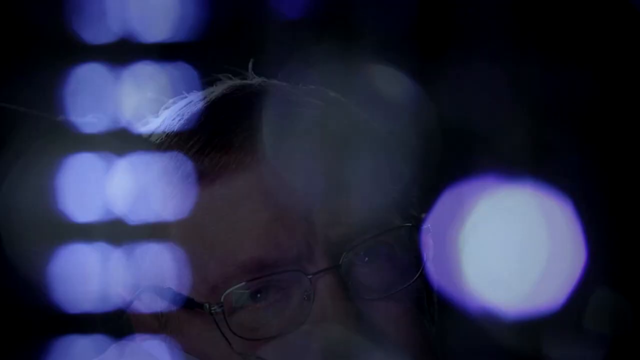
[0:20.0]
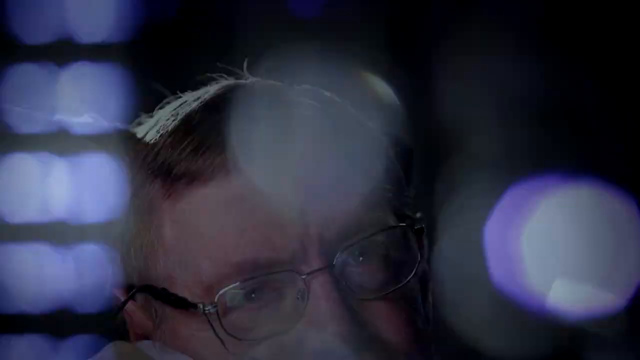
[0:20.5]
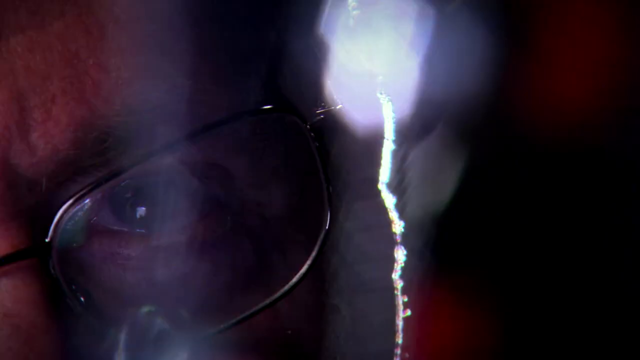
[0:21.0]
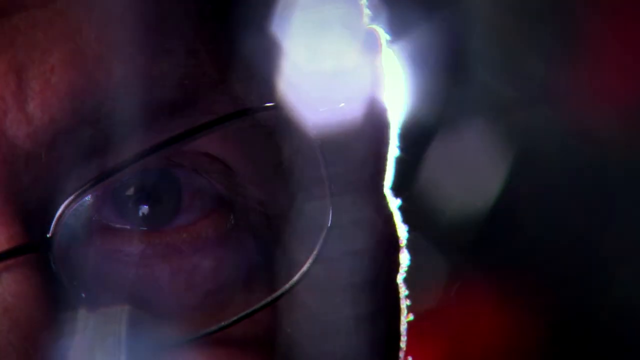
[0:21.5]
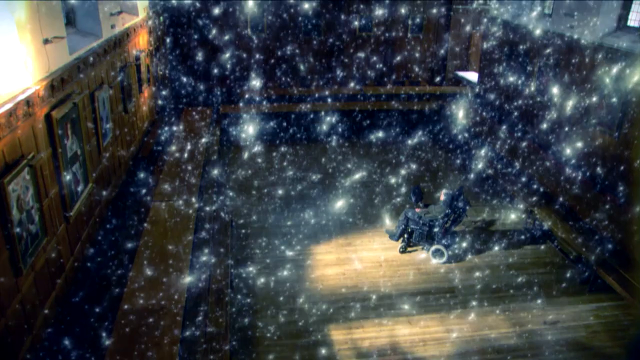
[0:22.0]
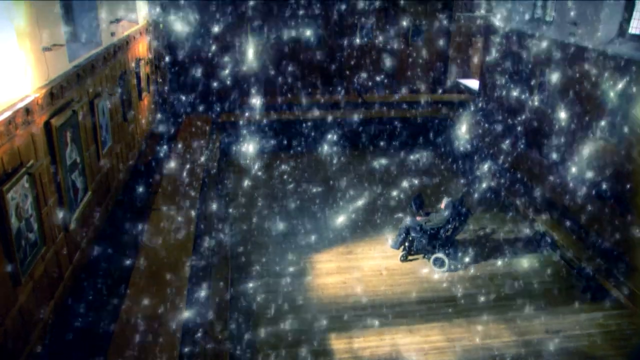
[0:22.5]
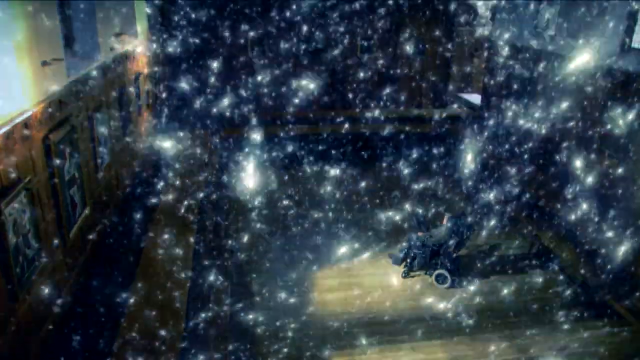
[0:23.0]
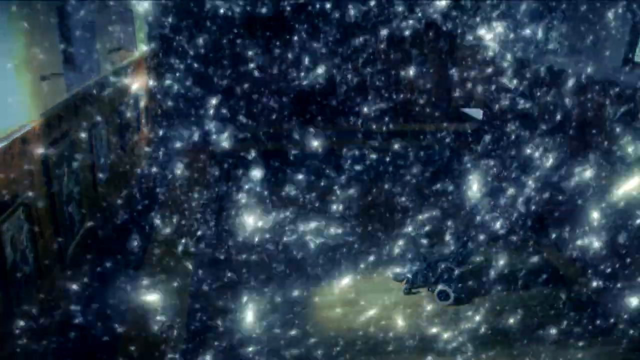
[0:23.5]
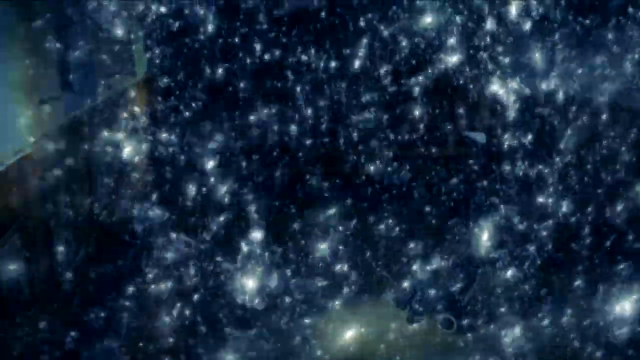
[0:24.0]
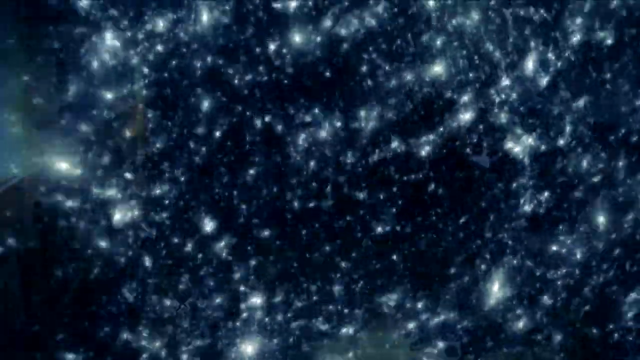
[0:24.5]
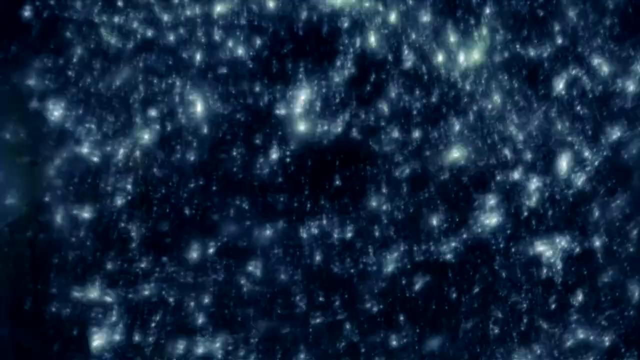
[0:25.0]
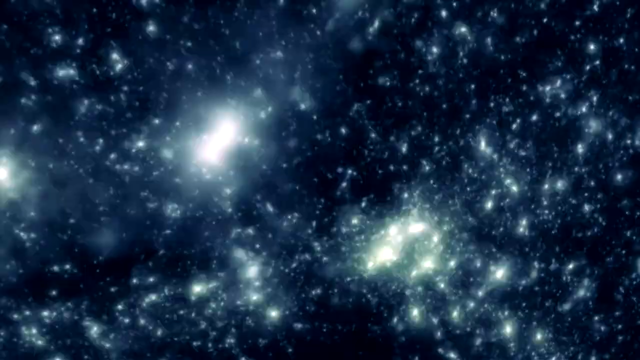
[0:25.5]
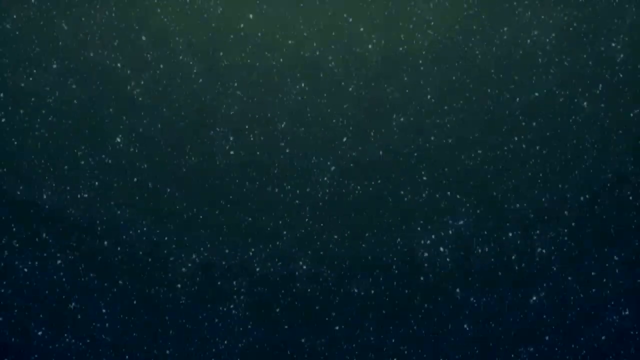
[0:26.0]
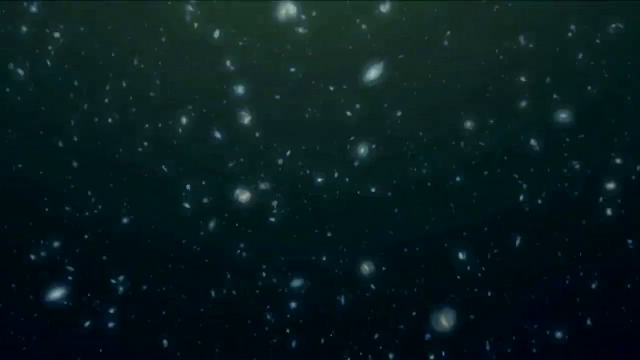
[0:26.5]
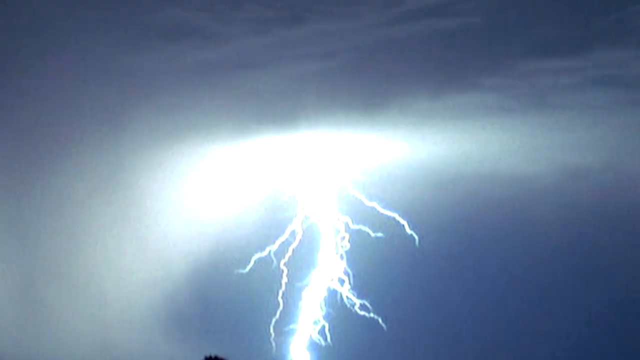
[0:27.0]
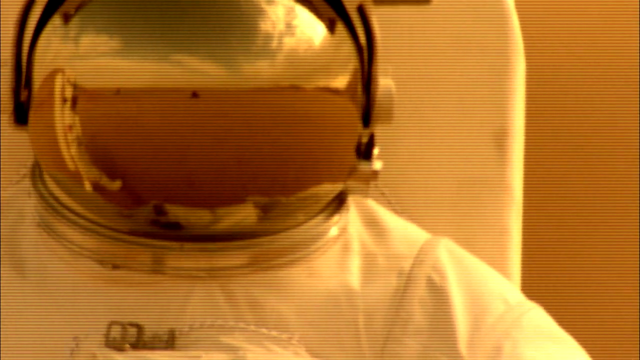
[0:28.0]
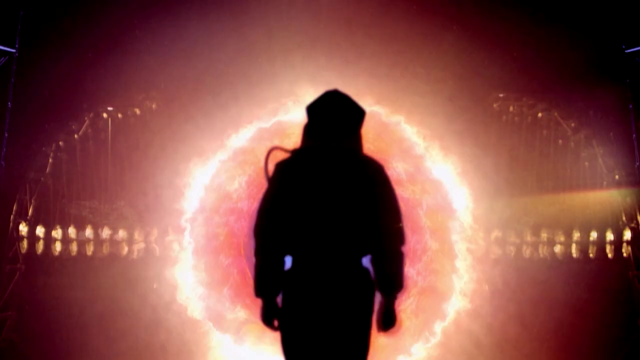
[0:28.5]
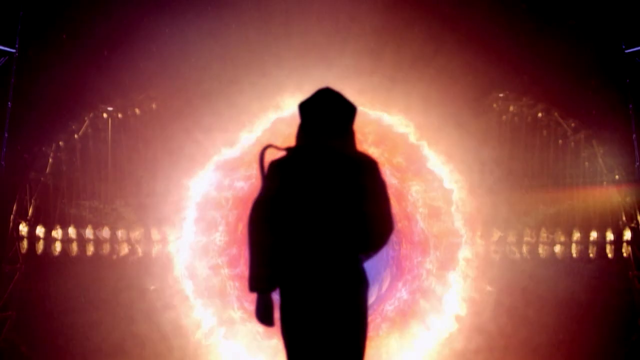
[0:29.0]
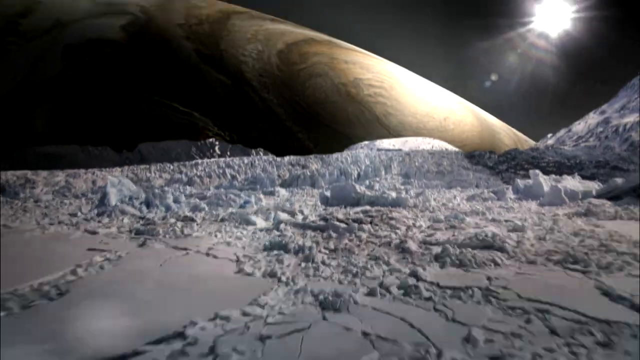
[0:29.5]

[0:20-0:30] Stephen Hawking is shown looking at hundreds and even thousands of different galaxies. The video cuts to transitional scenes of lightning striking from the sky, then to what appears to be a spaceman in a futuristic-looking spacesuit walking through a wormhole. A few seconds later the spaceman lands on alien-looking planets, followed by an immediate cut to what appears to be an alien in full view.